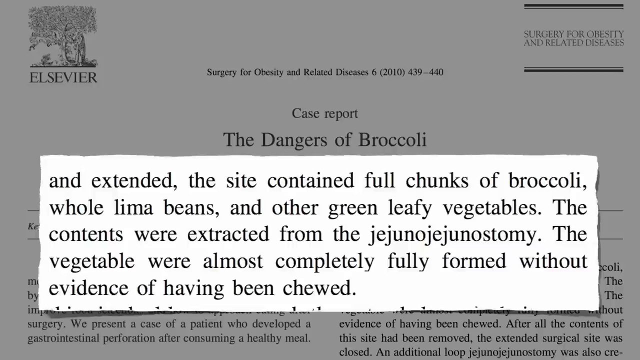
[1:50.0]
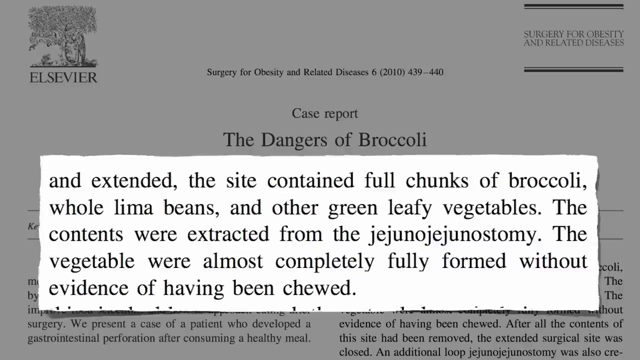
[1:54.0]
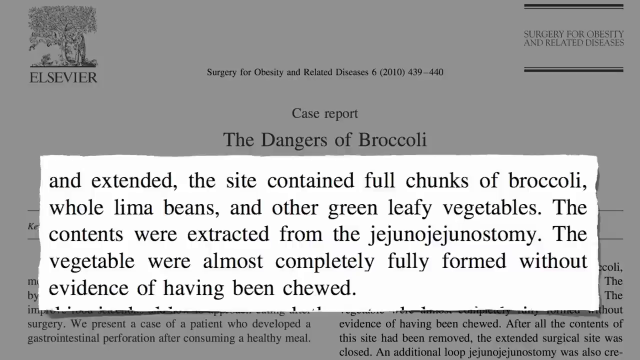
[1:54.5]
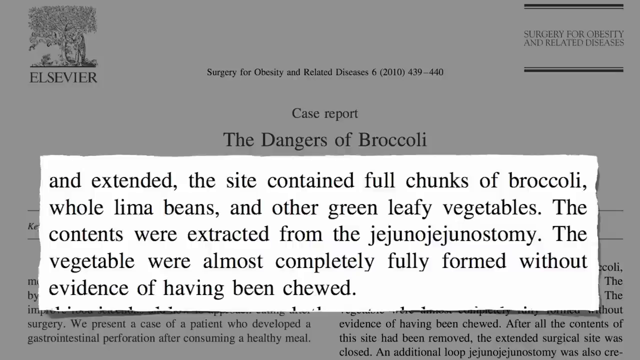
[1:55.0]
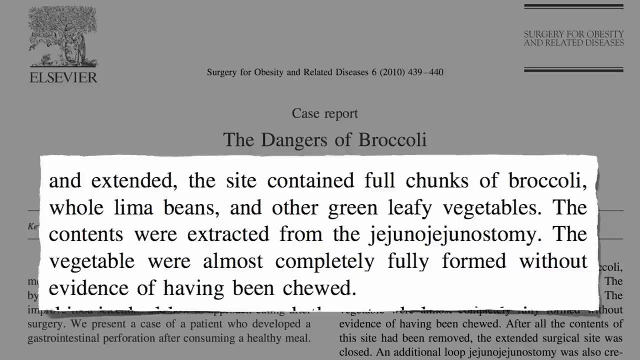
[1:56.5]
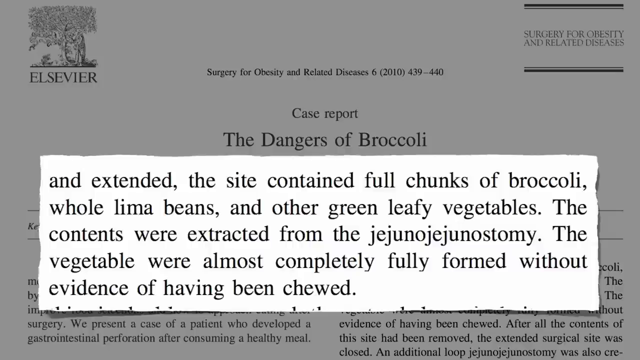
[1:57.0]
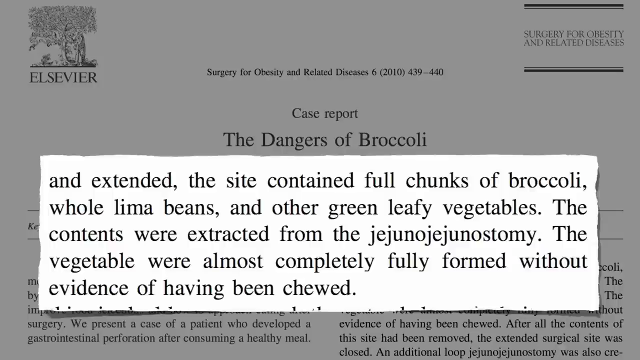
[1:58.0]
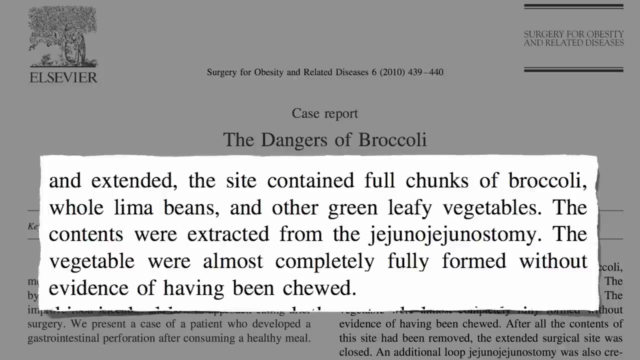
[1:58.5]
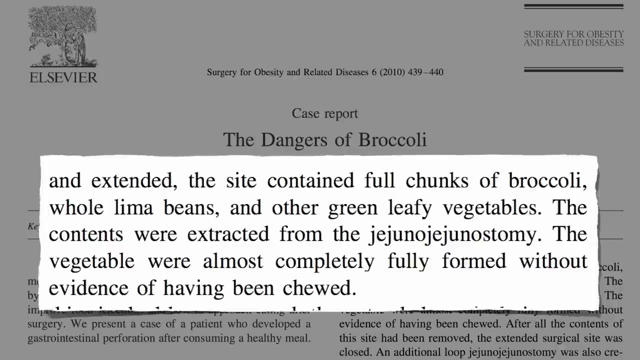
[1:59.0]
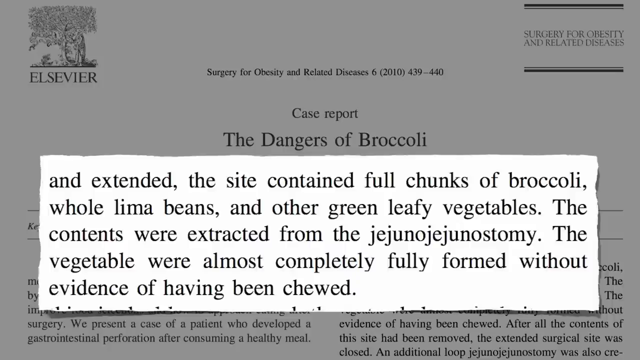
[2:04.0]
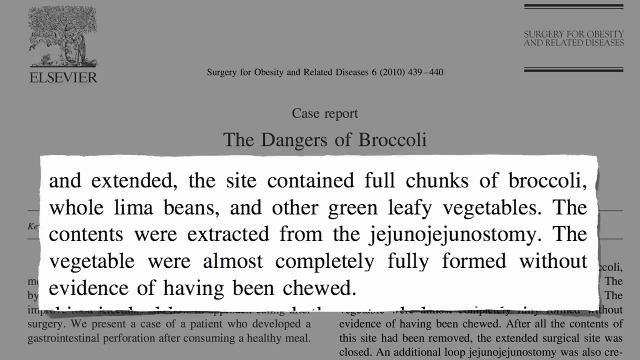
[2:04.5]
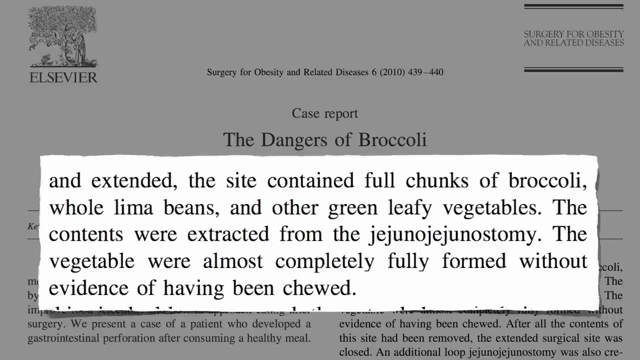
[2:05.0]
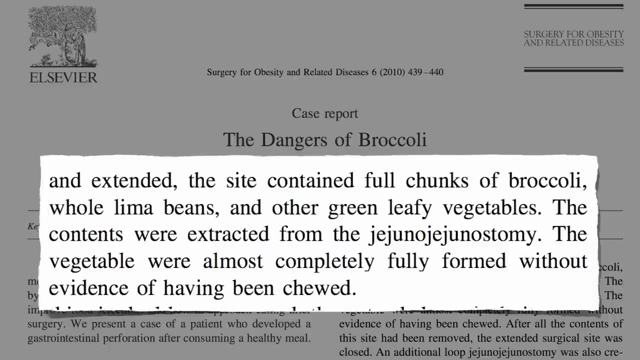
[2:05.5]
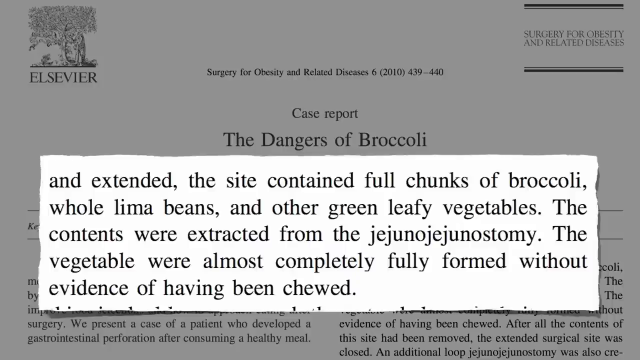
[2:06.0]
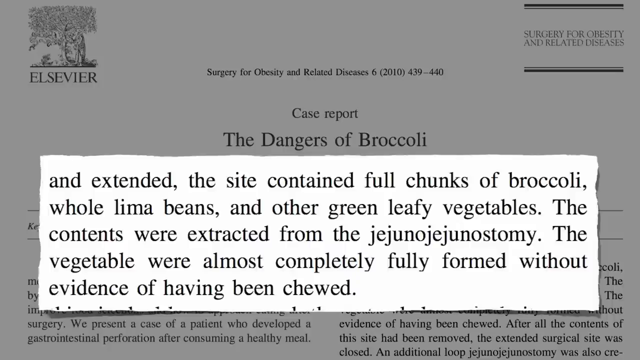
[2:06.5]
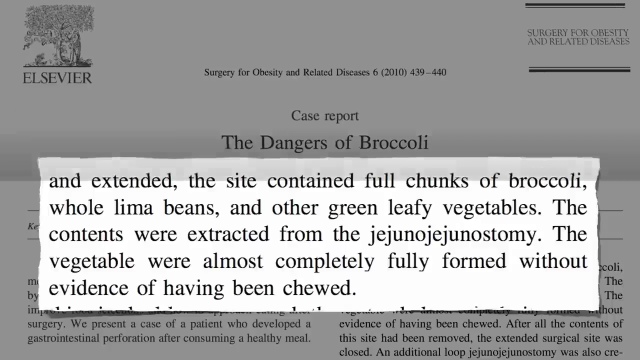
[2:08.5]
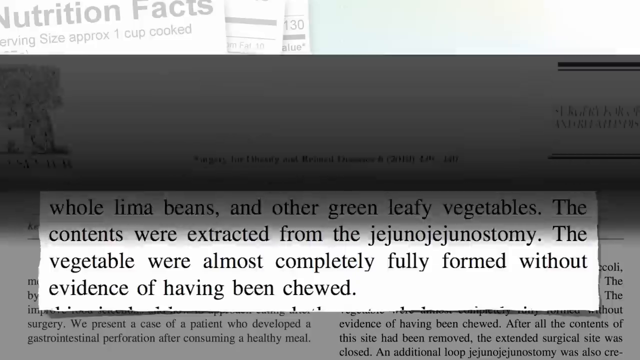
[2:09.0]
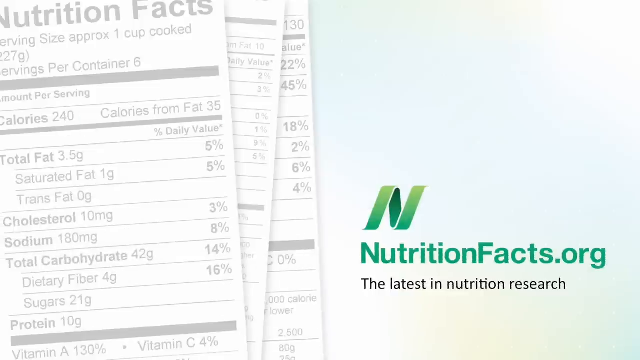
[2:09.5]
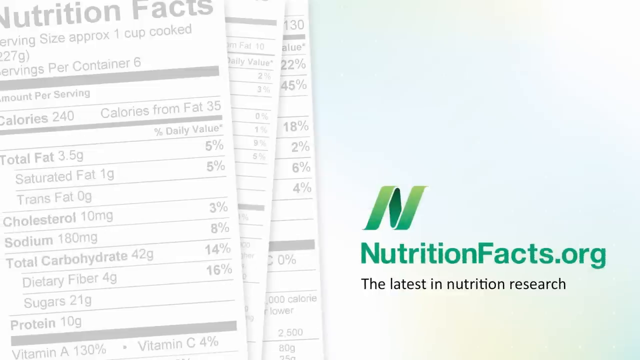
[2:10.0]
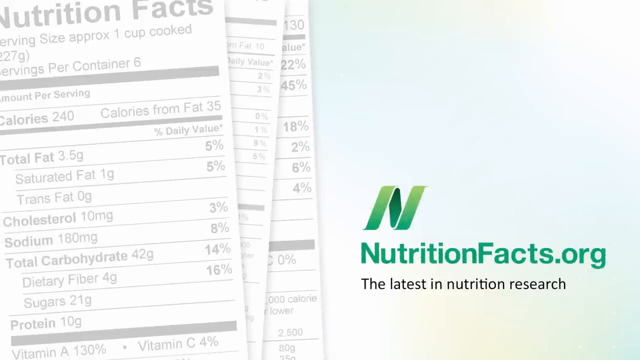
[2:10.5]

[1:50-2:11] The zoomed-in view of the highlighted paragraph appears again and stays on screen. The highlighted section has slightly rough edges with a stylistic look and a little shadow at the ends. A slide animation then folds the top half down, returning to the title page with "nutritionfacts.org". A greenish nutrition logo shaped like a ribbon forming an N is in the middle of the slide, with the subtitle "the latest in nutrition research" below. On the left side, nutrition facts clip art is somewhat faded, at maybe 60% opacity, with three nutrition facts stacked on top of each other. The background is a faint gradient, somewhat bluish, greenish and yellow, but mostly white.